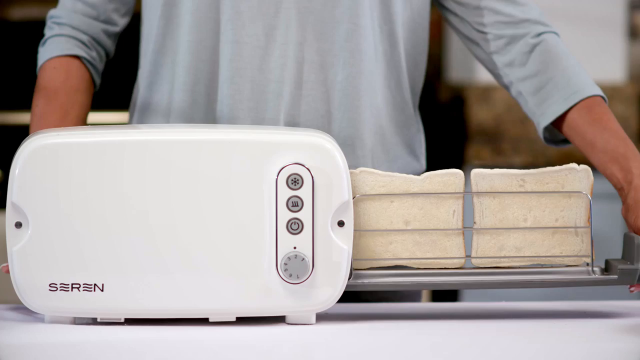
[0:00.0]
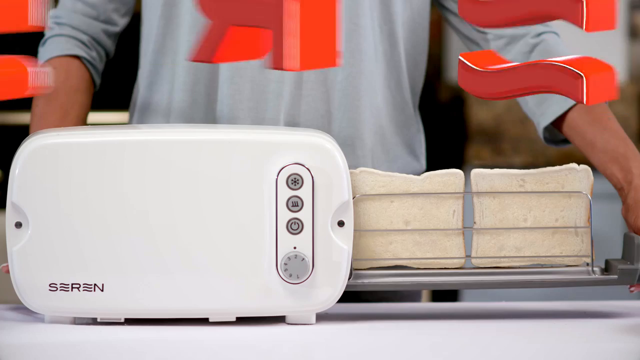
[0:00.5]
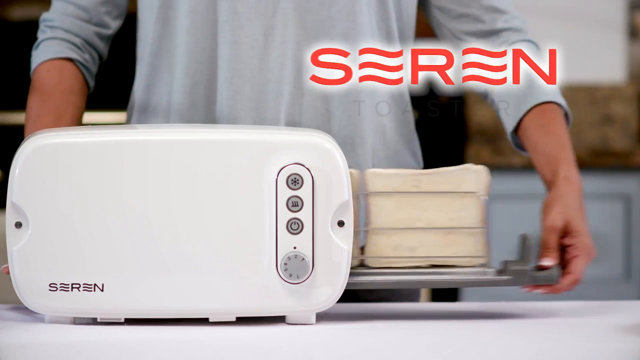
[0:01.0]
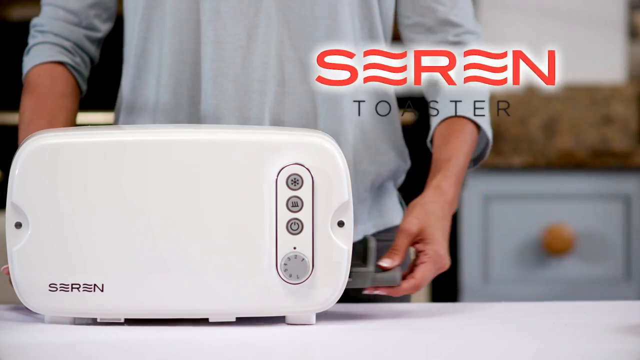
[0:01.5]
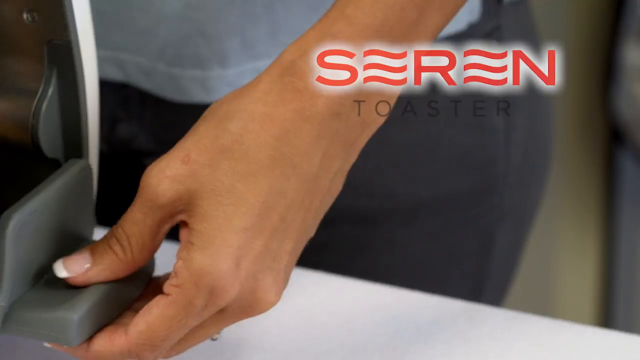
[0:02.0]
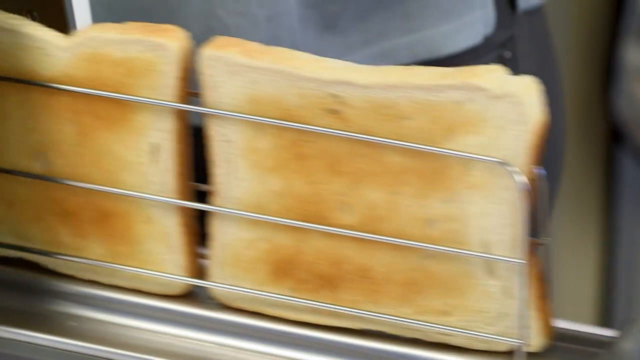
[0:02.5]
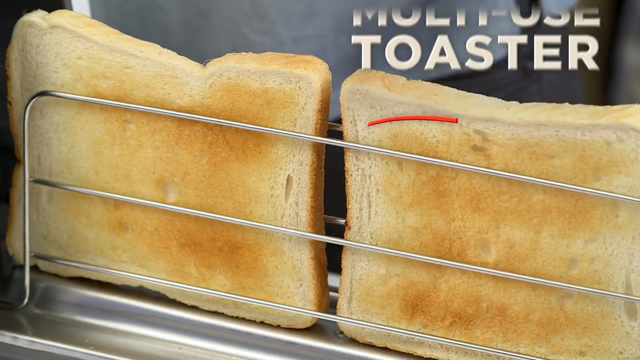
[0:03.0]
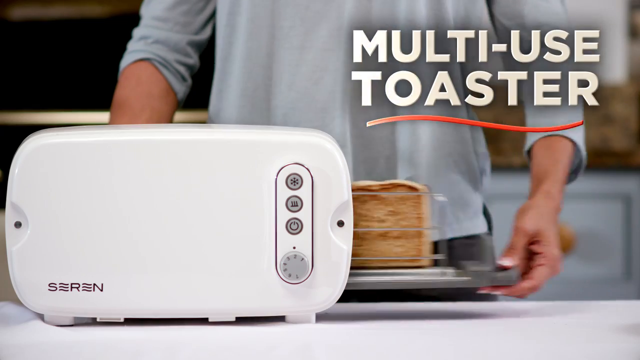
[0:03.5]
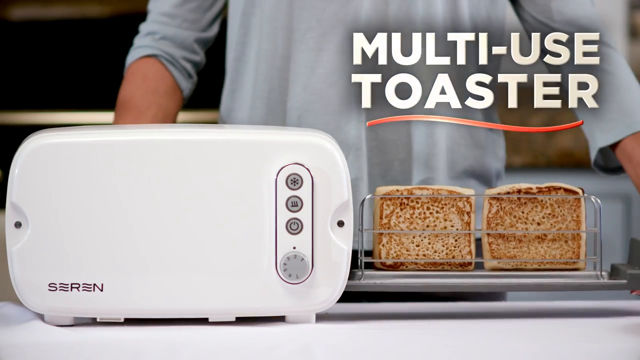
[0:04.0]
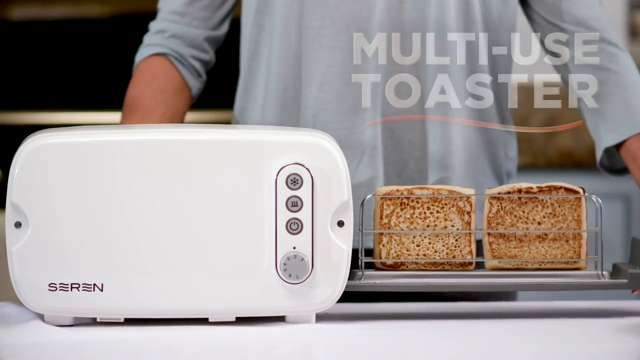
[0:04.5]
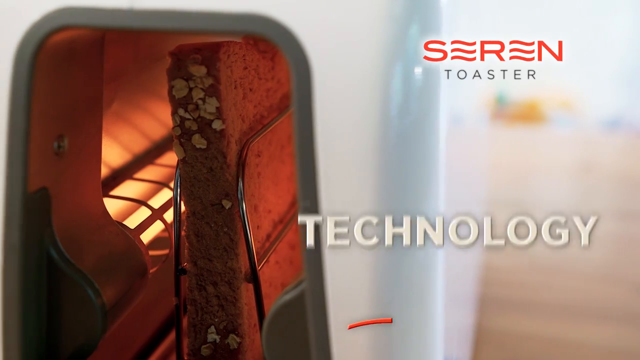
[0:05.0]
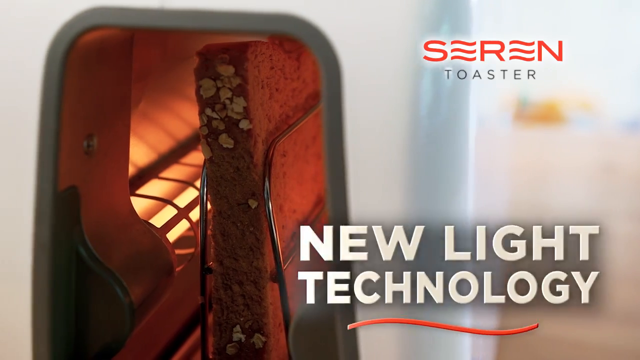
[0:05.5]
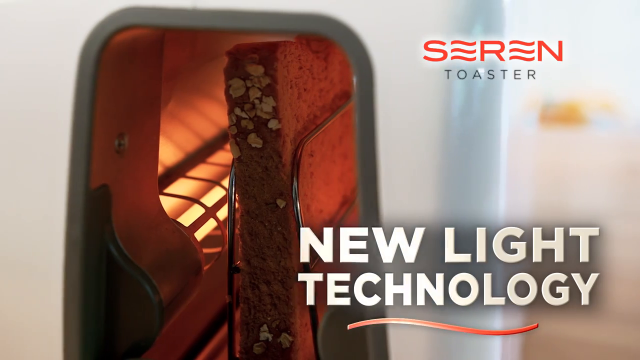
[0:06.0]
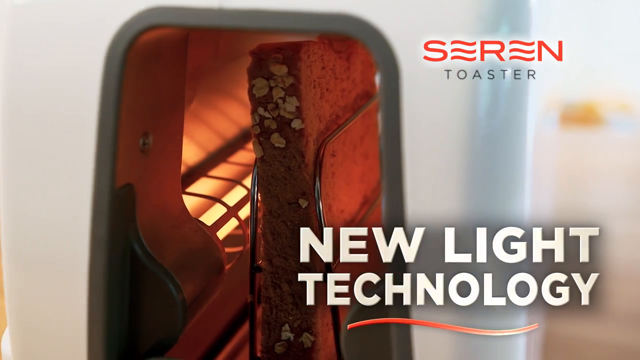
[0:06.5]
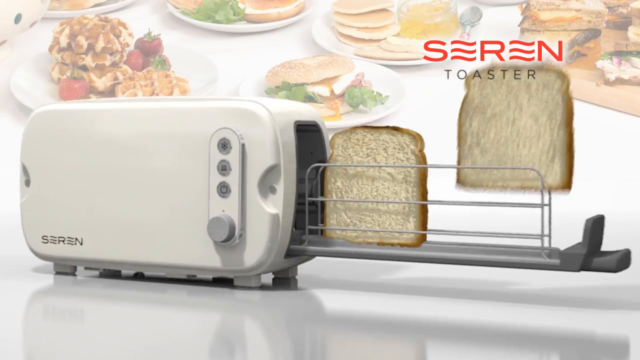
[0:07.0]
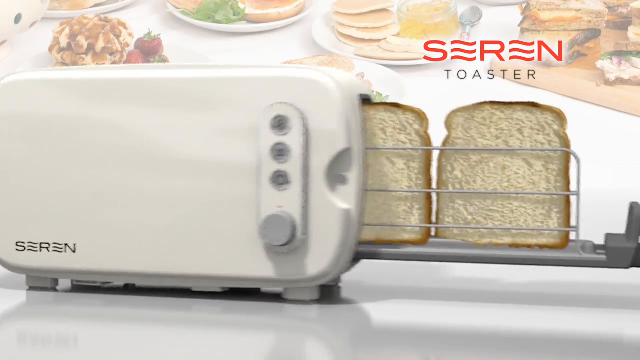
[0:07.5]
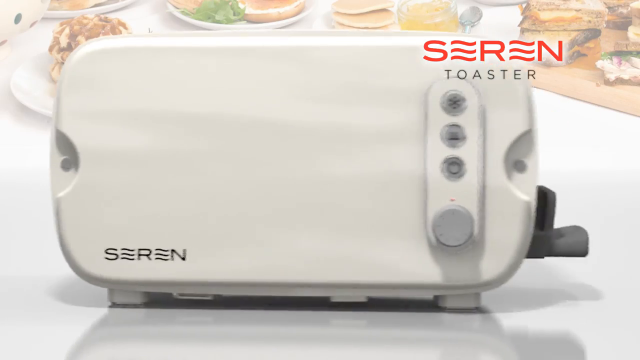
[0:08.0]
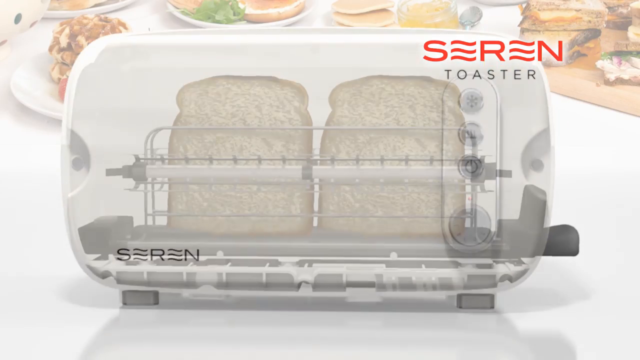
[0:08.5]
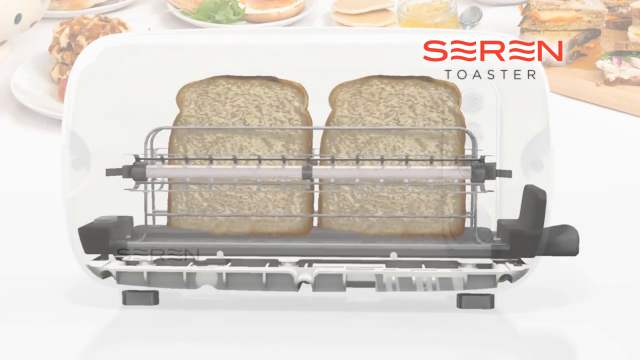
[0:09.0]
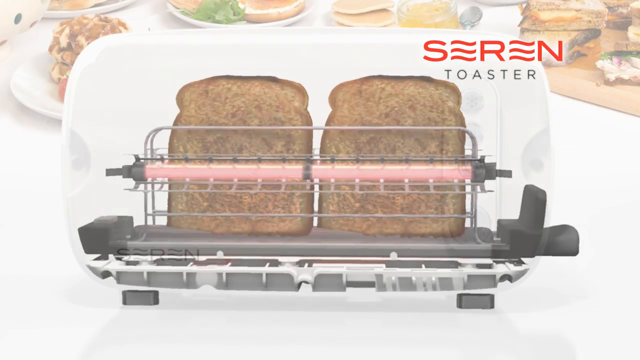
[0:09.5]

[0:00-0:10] This is an ad for the Seren toaster, a white toaster with its opening on the side rather than the top. The first image shows the toaster on the left side of the screen; it is the size of a toaster but a little wider horizontally than usual. A rack has been slid out of the toaster holding two slices of white bread that are not yet toasted. The toaster and rack are held by what is probably a man in a light aqua long-sleeved T-shirt; only the middle of his torso and his arms are visible, his hands hidden by the toaster, and his sleeves are slightly pushed up. The image changes to a quick flash of the Seren logo in the upper right-hand corner: "Seren" in red with the word "toaster" in gray stacked beneath it. For just one second, an image of two slices of toasted white bread appears. The next image has "multi-use toaster" in white in the upper right-hand corner against the man's aqua T-shirt, with a red line under it. Something is slid out of the toaster, maybe toasted whole grain bread or some other bread product. The camera then pans to the inside of the side-loading toaster, showing the rack holding a piece of whole wheat bread and a red light bar. The logo "Seren Toaster" is at the upper right, and in the lower right, "new light technology" appears in bold font superimposed on the picture of the toaster. Another shot shows the white toaster with the rack being slid in with two pieces of white bread, while a faded-out background shows partial, very faint images of all kinds of foods, such as pancakes and maybe a bagel. The toaster closes with the bread inside. A cutaway shot of the side of the toaster shows the bread being heated by a pinkish red bar.